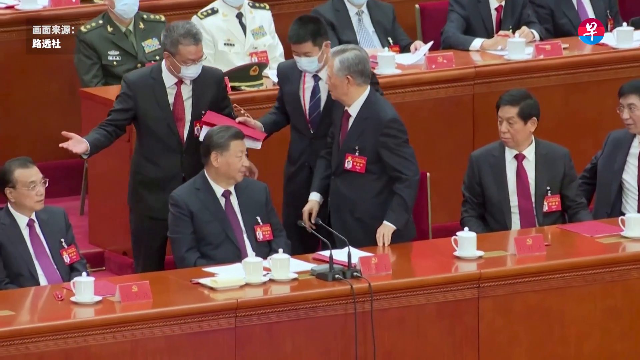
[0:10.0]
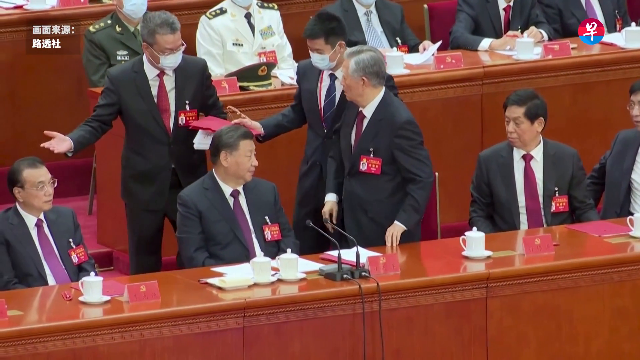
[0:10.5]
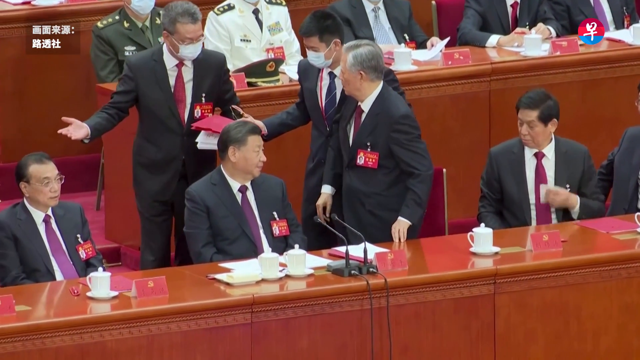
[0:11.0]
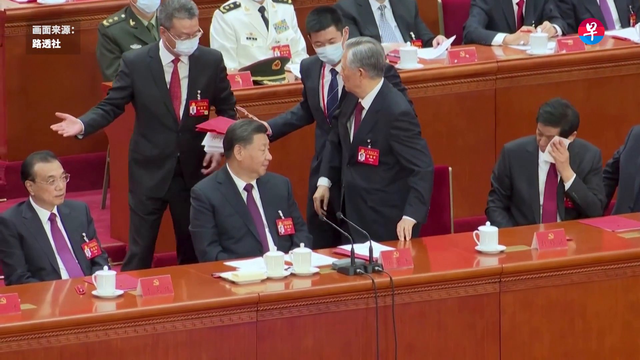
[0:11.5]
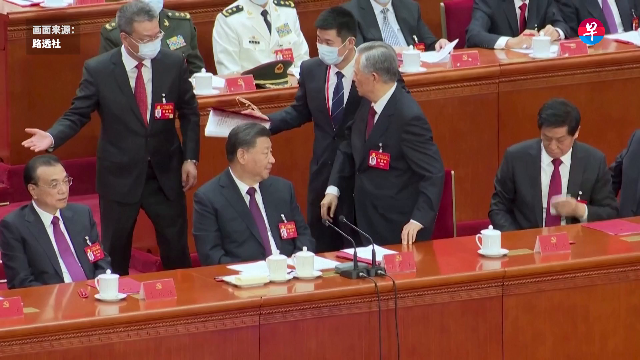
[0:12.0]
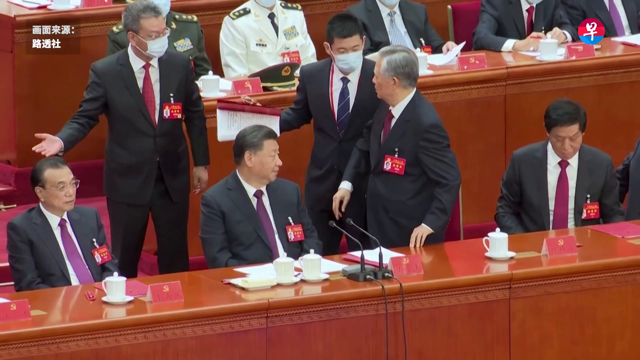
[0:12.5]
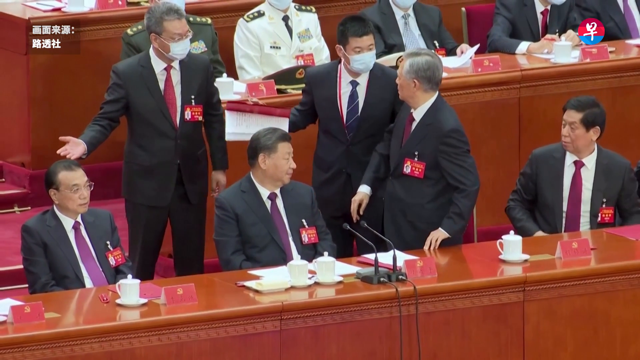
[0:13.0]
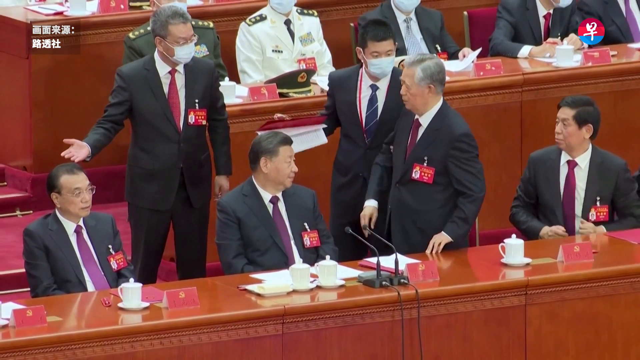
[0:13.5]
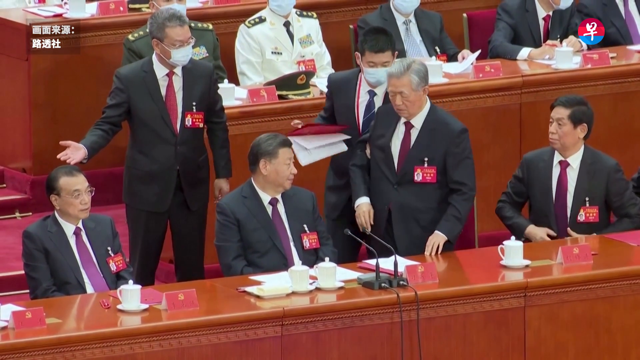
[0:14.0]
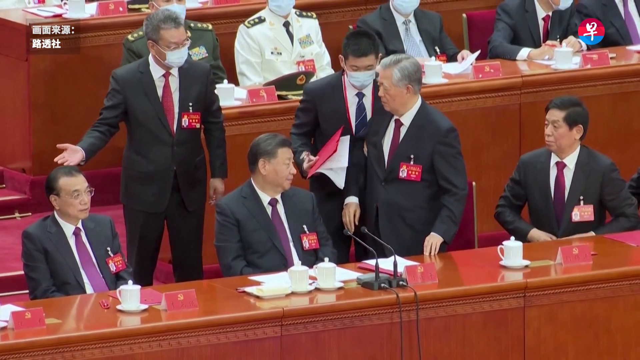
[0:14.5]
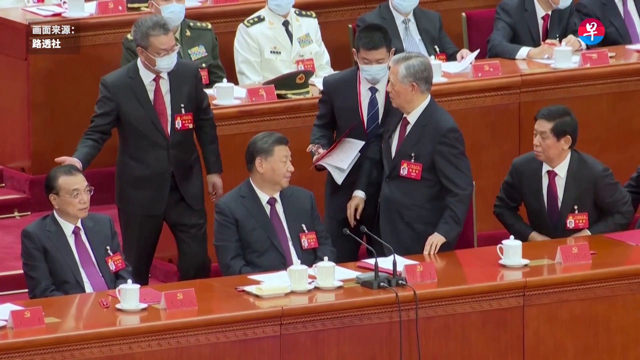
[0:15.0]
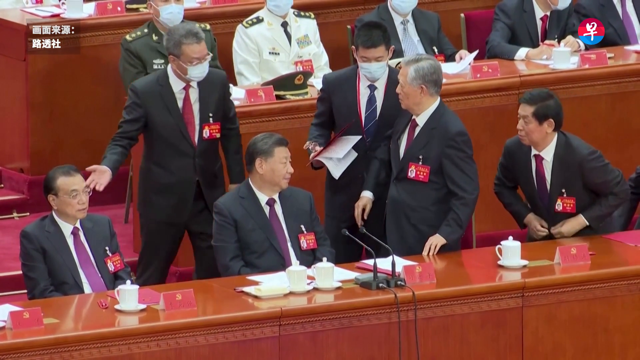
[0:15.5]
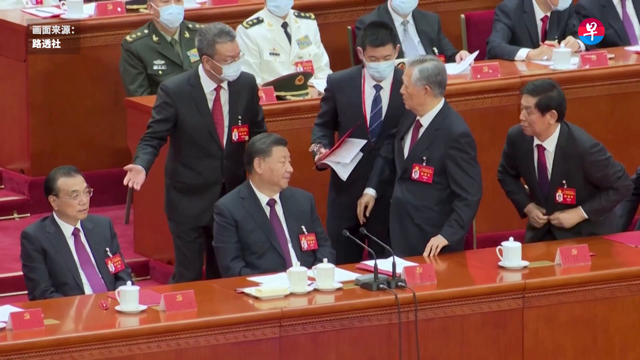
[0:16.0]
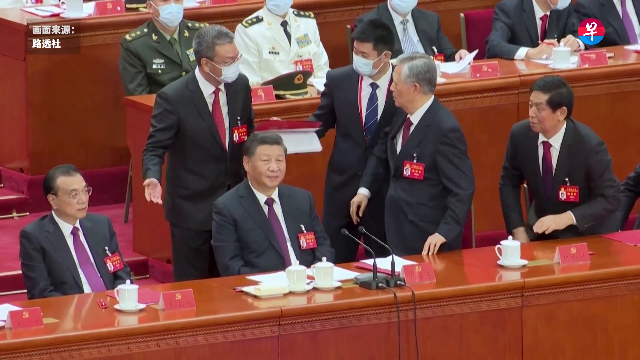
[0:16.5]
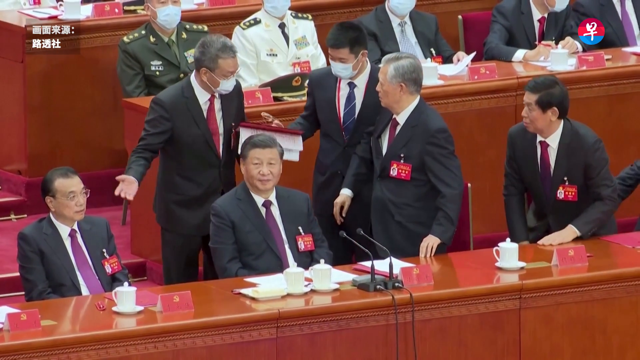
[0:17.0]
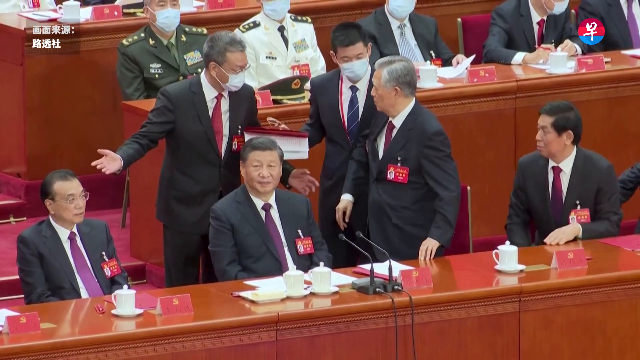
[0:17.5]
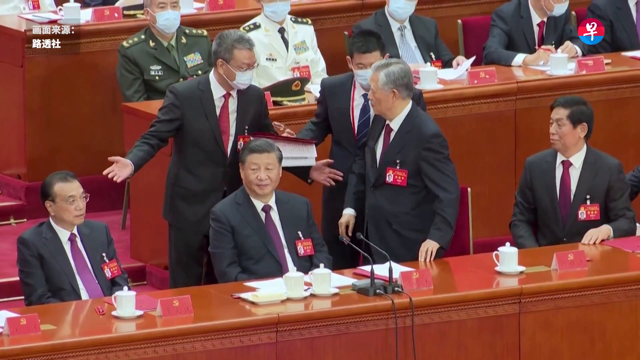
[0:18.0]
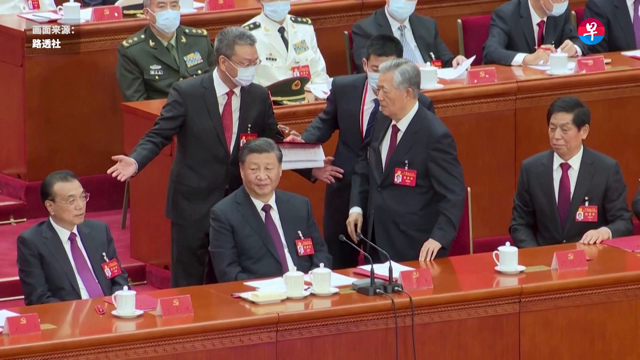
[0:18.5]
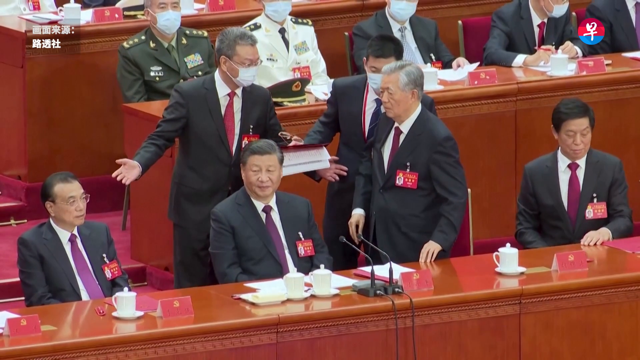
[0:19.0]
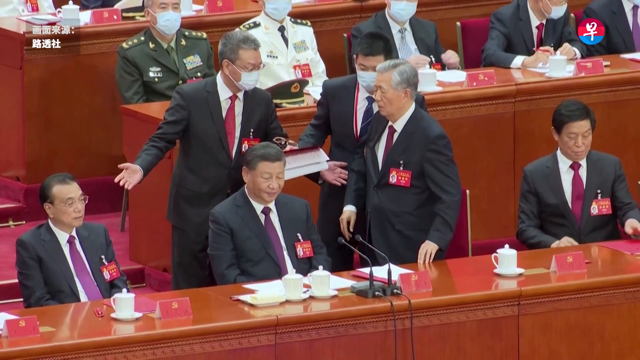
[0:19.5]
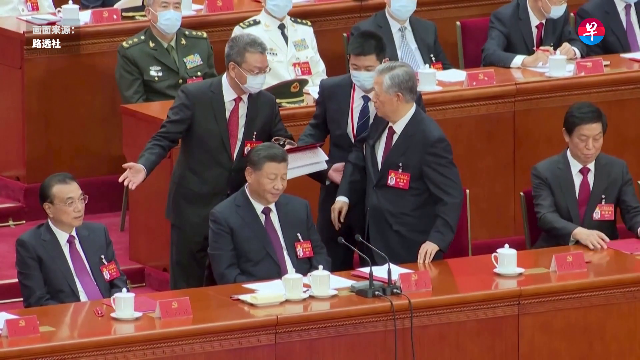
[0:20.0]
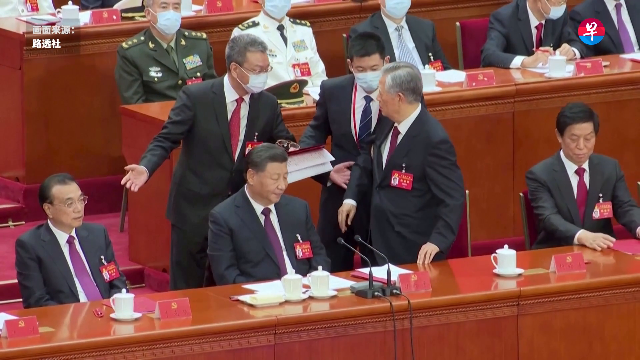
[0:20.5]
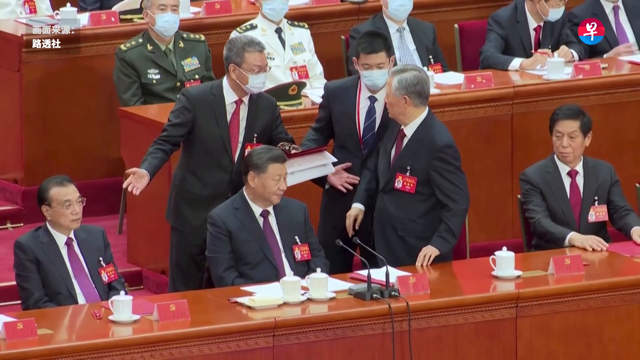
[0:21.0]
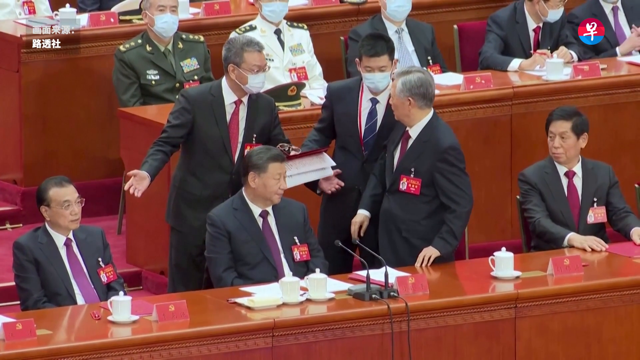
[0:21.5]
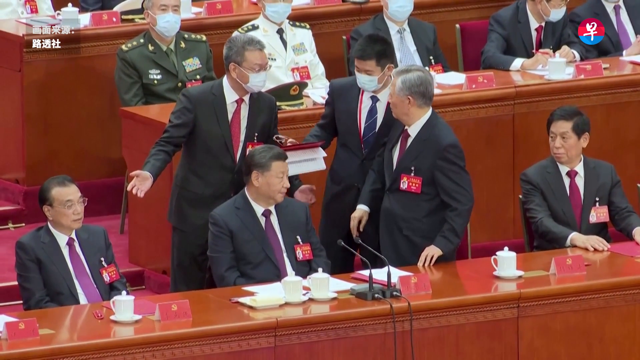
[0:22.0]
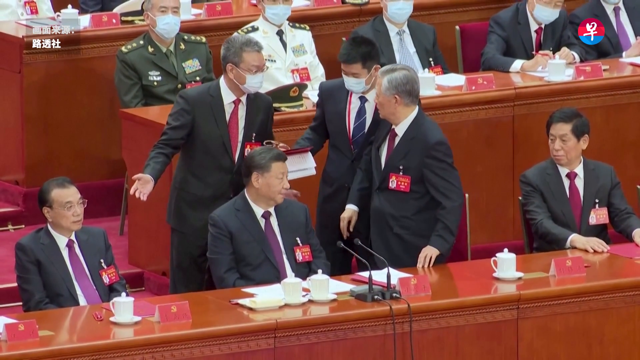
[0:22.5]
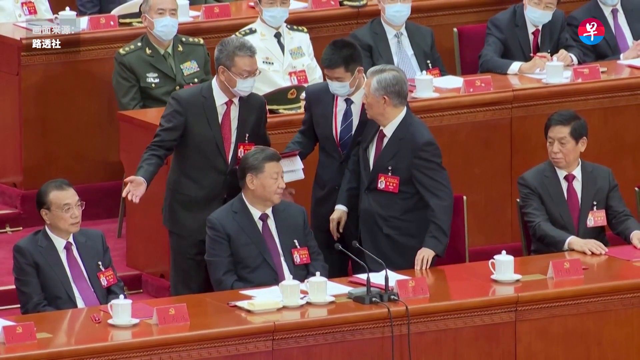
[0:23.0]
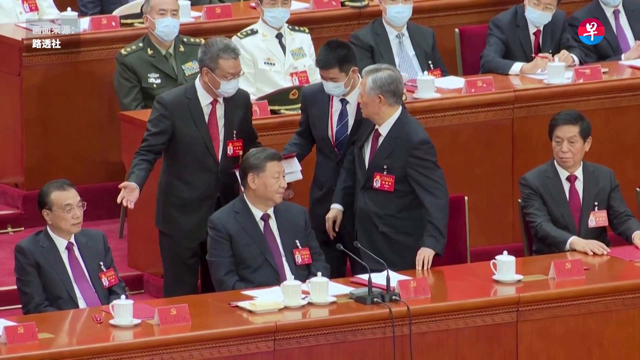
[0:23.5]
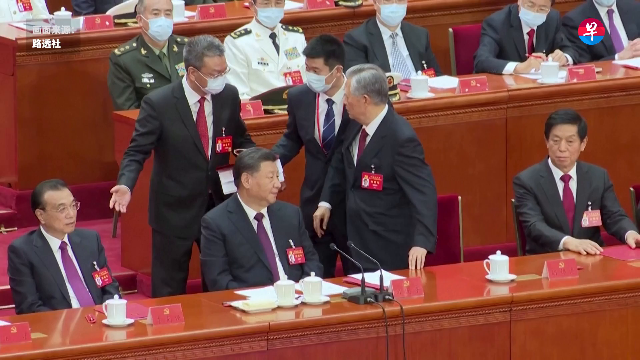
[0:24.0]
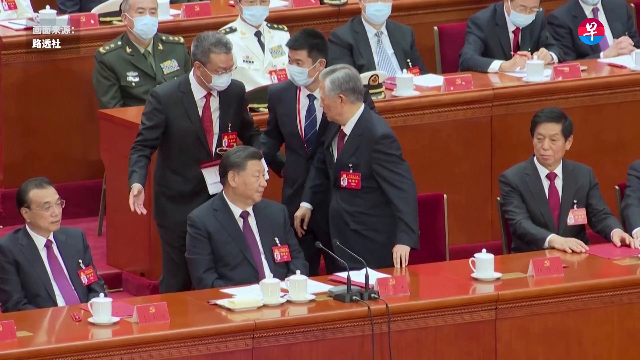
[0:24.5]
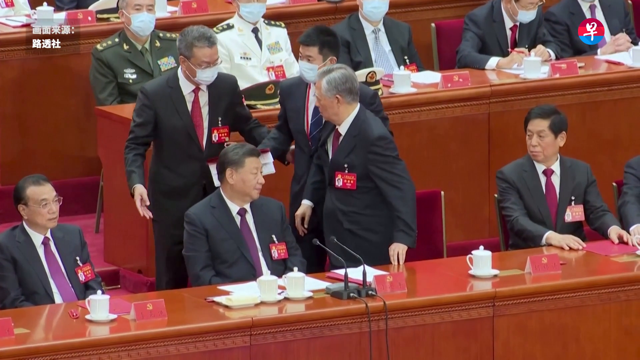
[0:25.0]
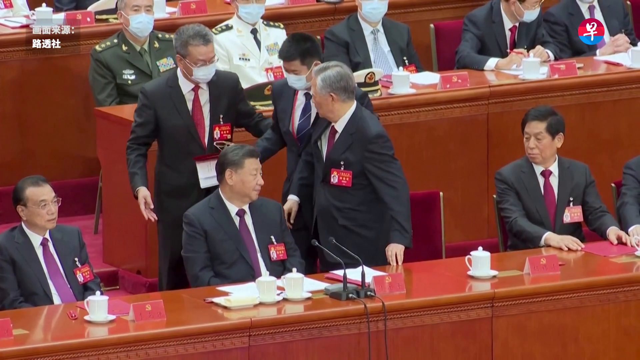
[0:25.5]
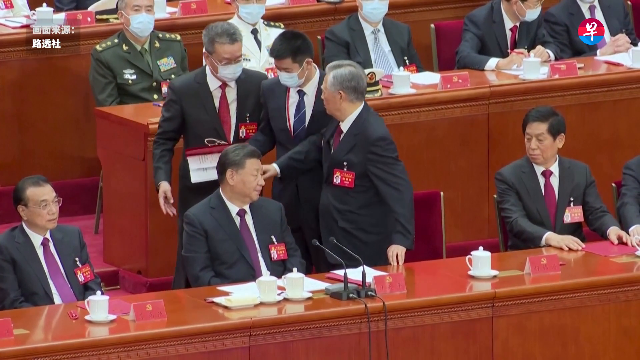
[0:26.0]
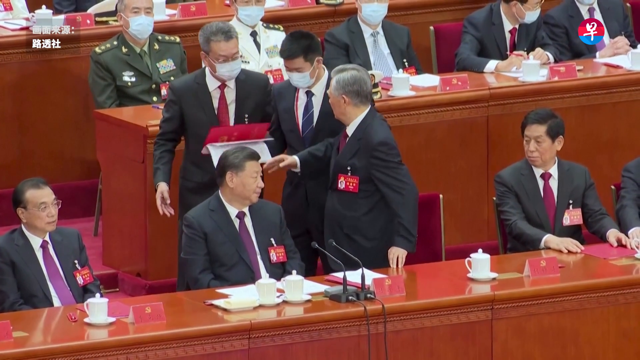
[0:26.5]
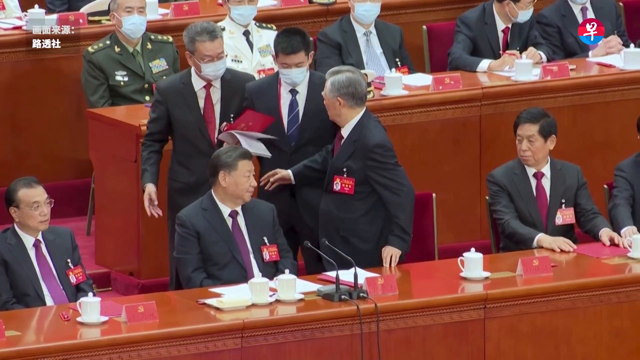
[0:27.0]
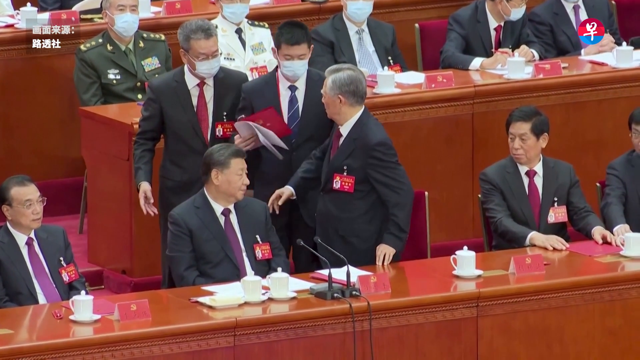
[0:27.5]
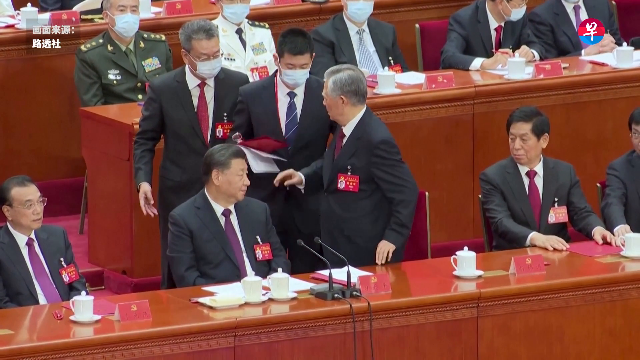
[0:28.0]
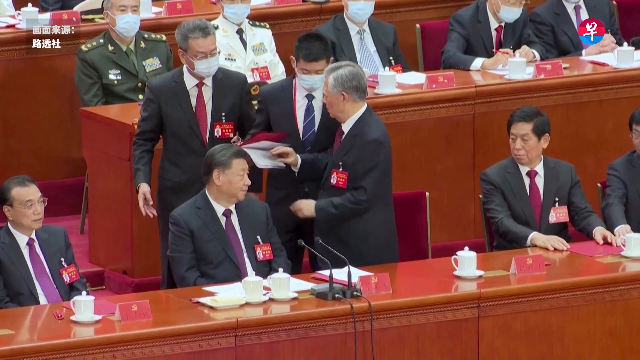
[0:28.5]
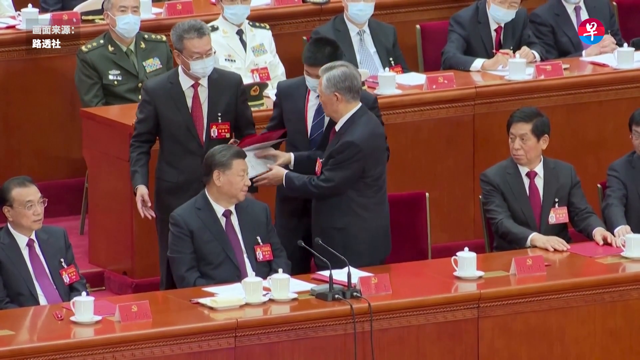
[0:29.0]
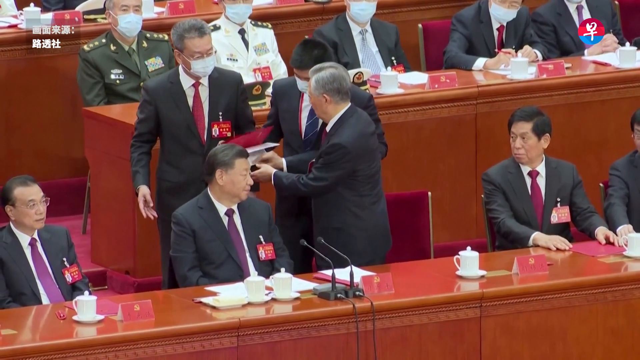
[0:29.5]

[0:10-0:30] Two gentlemen in grey suits and masks lead an older white gentleman with greyish, whitish hair, who wears a grey suit with a red badge on his jacket. They pull him away from a long brown table with reddish chairs, where other Asian gentlemen sit in grey jackets, white collared shirts and reddish purple ties, as the older gentleman is led from his chair. The carpet is pink. The two men keep talking to the older gentleman that he has to go. Other gentlemen sit in the rows just behind, with long brown desks in front of them holding what look to be white cups with little white caps, and each person has a reddish square in front of them at their chair. All the gentlemen seem to wear the same grey suits and white collared shirts, and those in the front row all wear purple and dark burgundy ties.